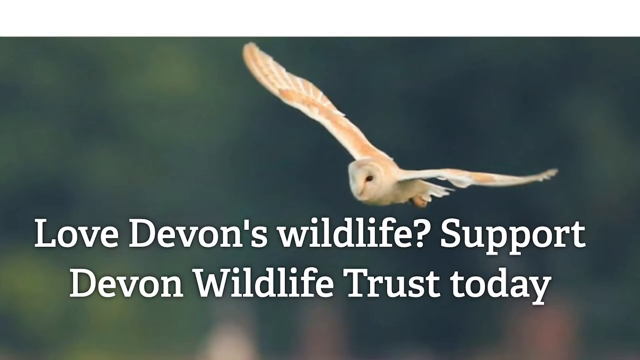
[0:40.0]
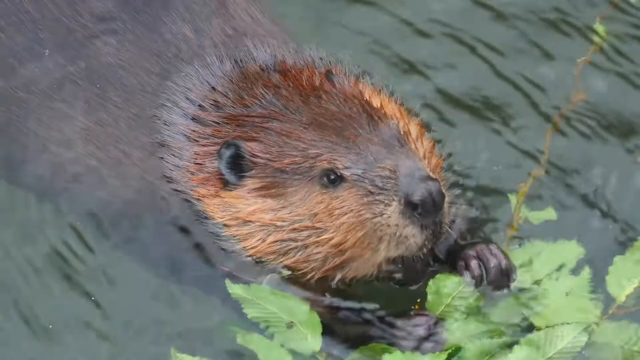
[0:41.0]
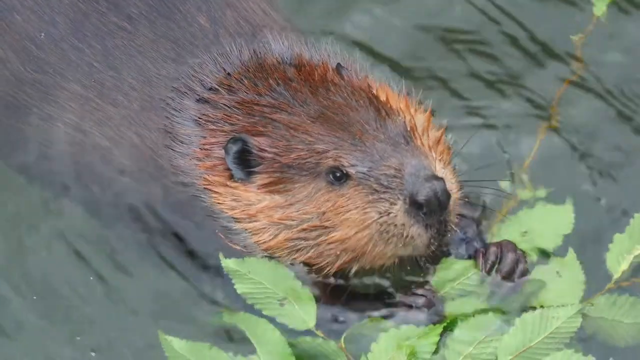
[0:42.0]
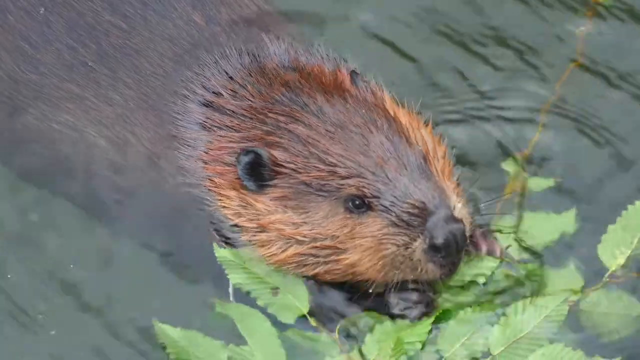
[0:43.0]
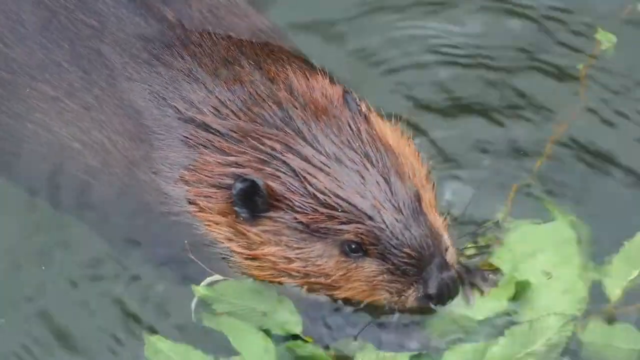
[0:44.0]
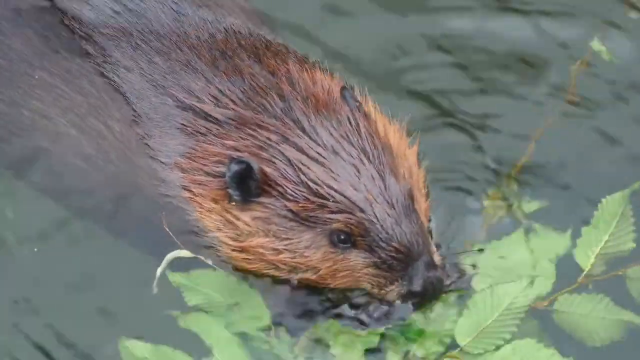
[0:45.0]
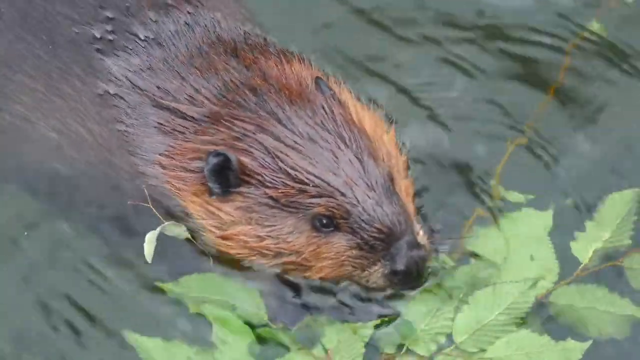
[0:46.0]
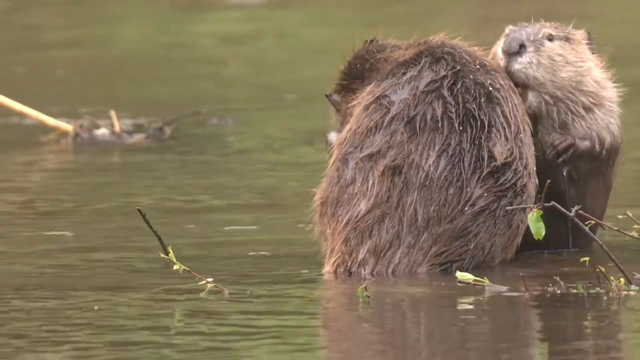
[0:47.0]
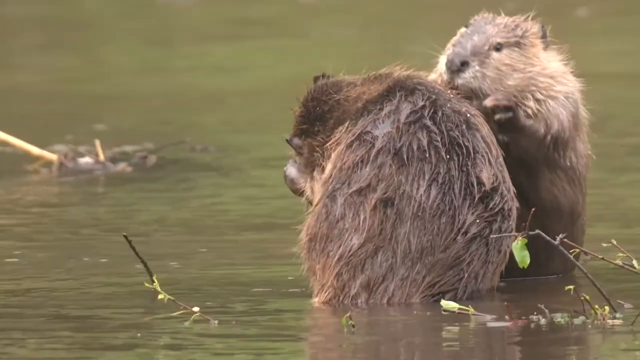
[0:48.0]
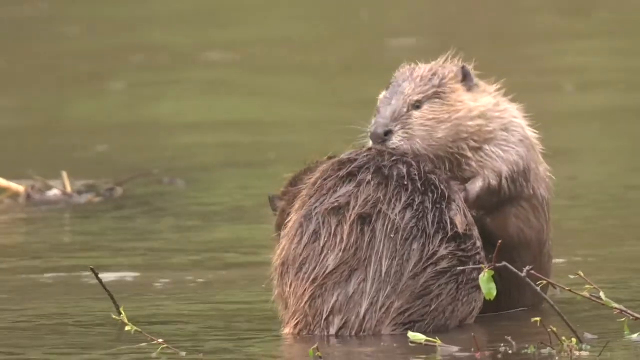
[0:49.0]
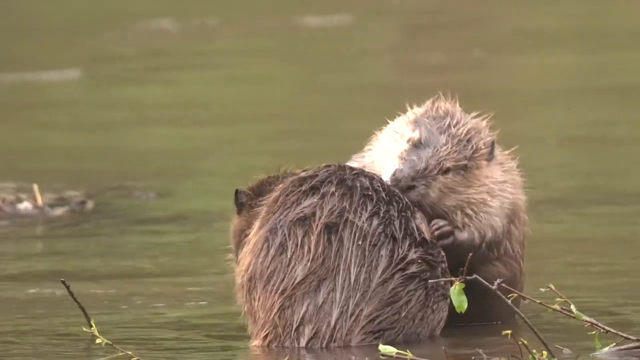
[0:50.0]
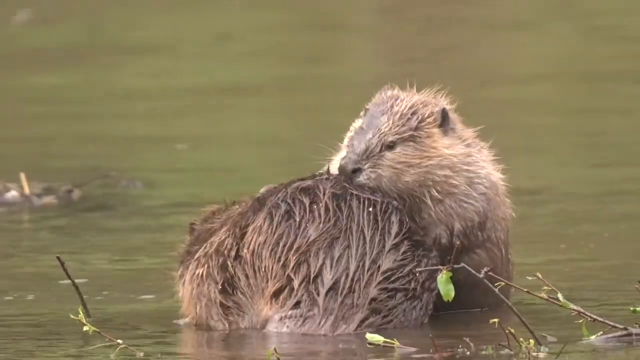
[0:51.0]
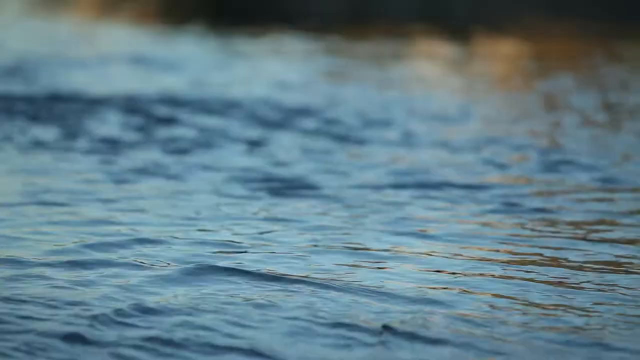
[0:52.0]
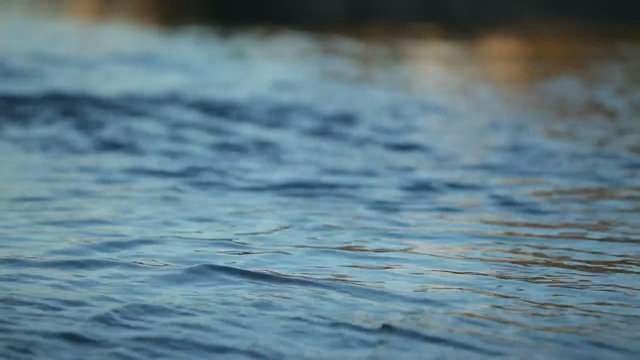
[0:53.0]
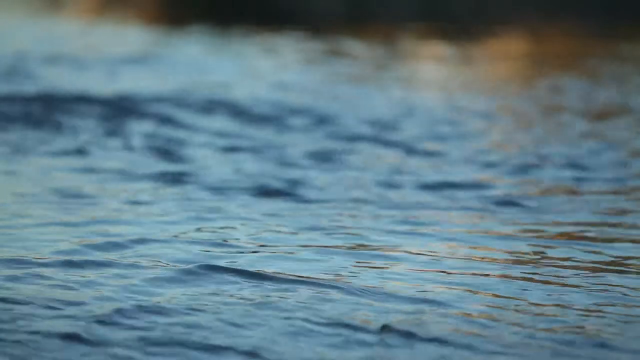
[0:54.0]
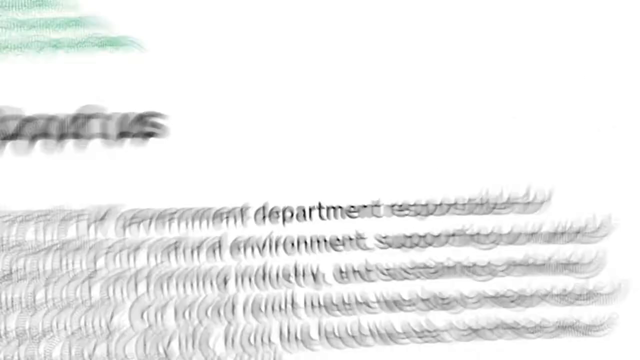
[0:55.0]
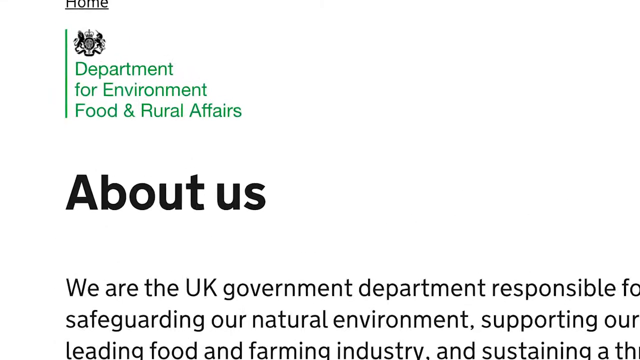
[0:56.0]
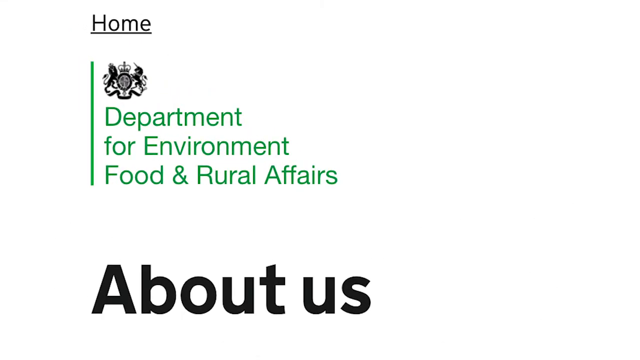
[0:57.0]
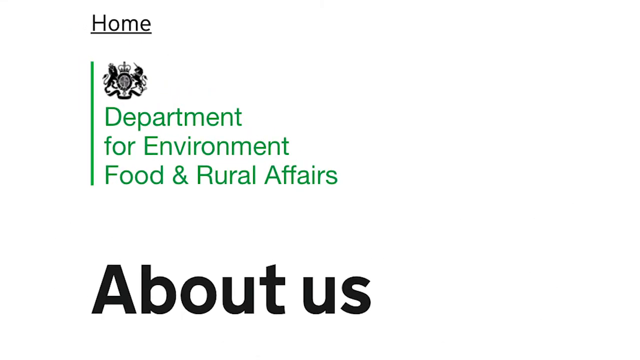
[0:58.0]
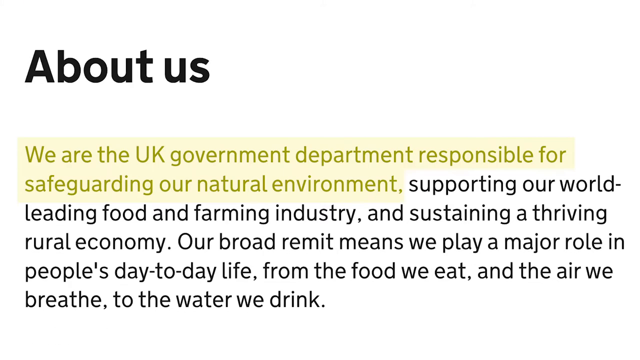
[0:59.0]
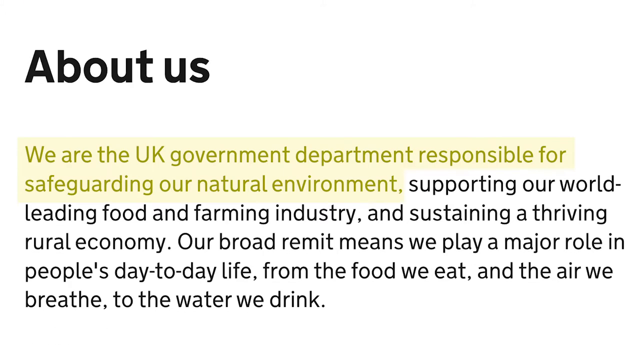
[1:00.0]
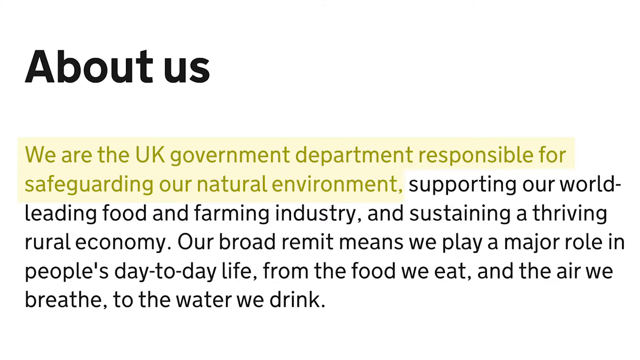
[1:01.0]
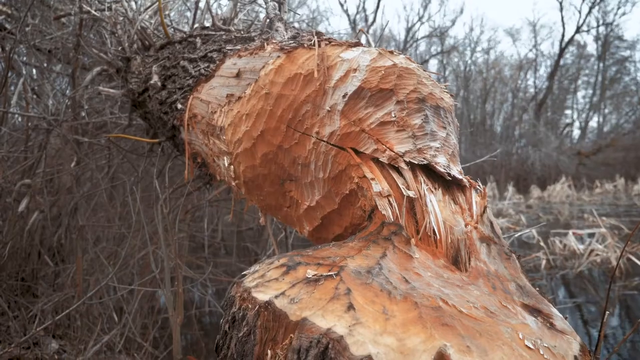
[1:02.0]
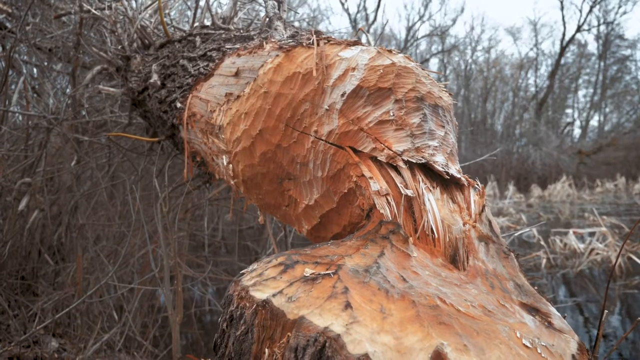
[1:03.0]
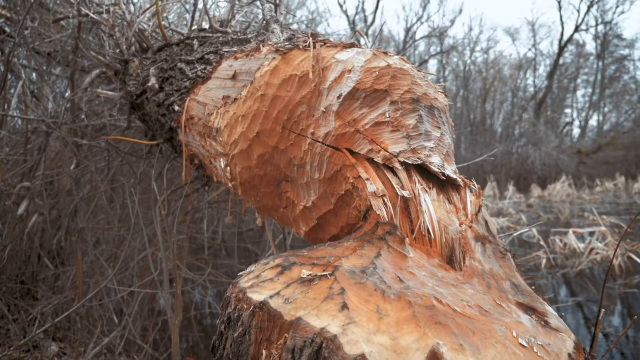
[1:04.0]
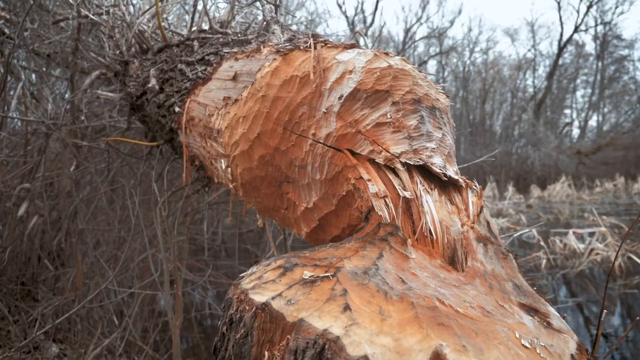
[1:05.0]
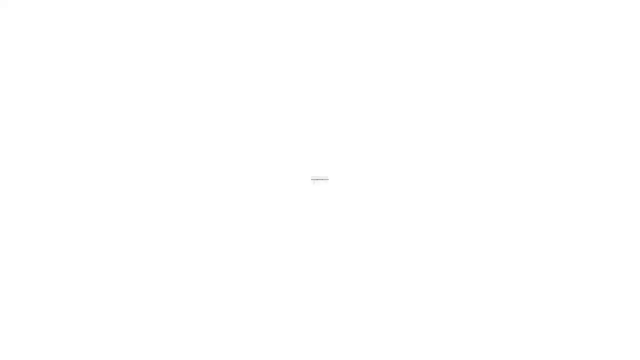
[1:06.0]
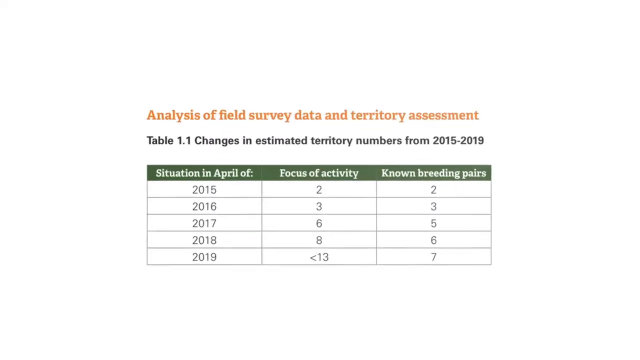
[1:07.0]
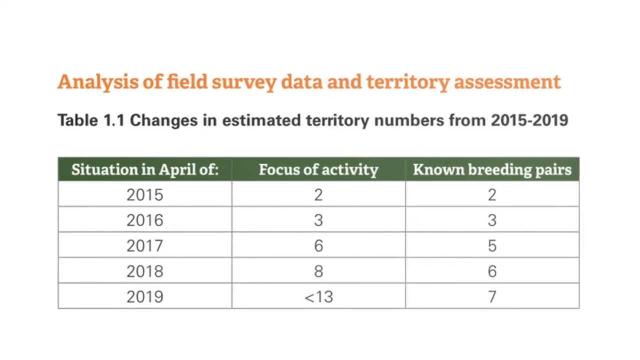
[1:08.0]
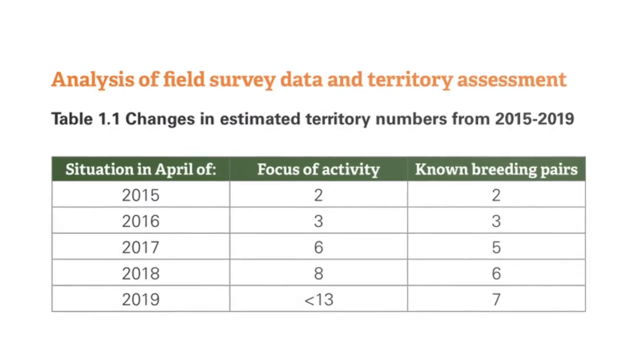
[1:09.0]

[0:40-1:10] A soaring white-orange owl is shown, with white lettering on the blurred background that says "Love Devon's Wildlife, Support Devon Wildlife Trust today". The video spins and transitions to a beaver fully submerged in water except for one ear, its forehead, one eye, its nose, and its left front paw, as it chews on a green leaf, then holds it with both paws. The beaver's paws and the leaf submerge under the water, but the beaver continues to chew on it. Next, two large beavers stand in shallow river water; one appears to be searching and combing the other's fur, perhaps for bugs and parasites. The video transitions to a level shot of the water, then spins and transitions to a screenshot showing the Department for Environment, Food, and Rural Affairs. Below this is a home button and "about us" in bold black lettering. A paragraph below states, highlighted in yellow, "We are the UK Government Department responsible for safeguarding our natural environment." The highlighting stops there, but the wording continues: "Supporting our world-leading food and farming industry. And sustaining a thriving rural economy. Our broad remit means we play a major role in people's day-to-day life. From the food we eat and the air we breathe to the water we drink." The video then transitions to a wooded area with bare trees with no leaves. One of the trees has come down; it looks like it has been chewed on to the point that it fell over. The video then transitions to an analysis of field survey data and territory assessment.